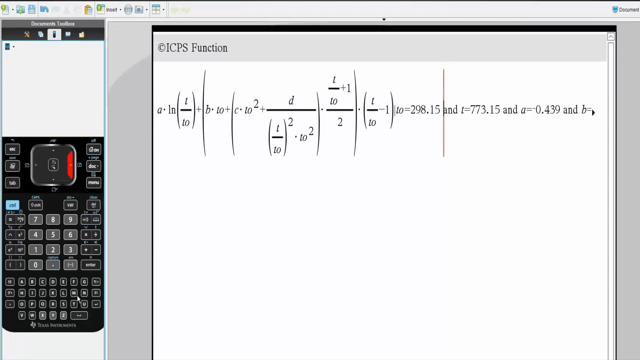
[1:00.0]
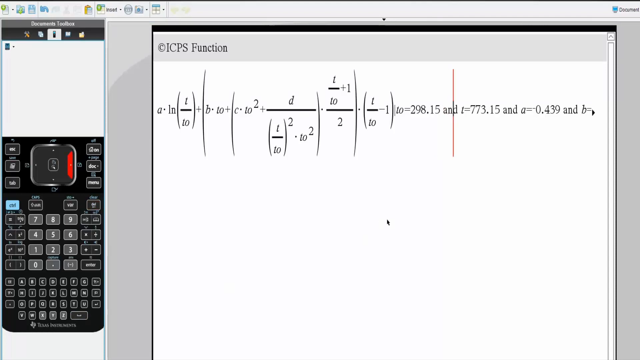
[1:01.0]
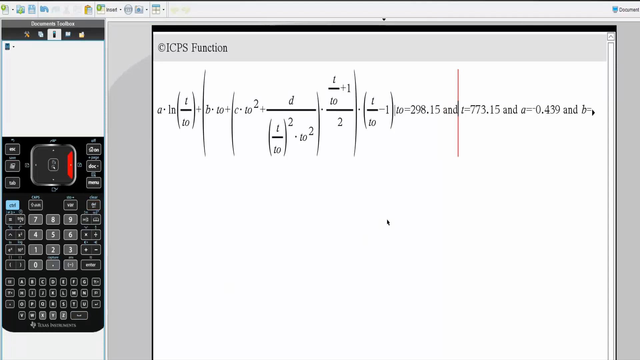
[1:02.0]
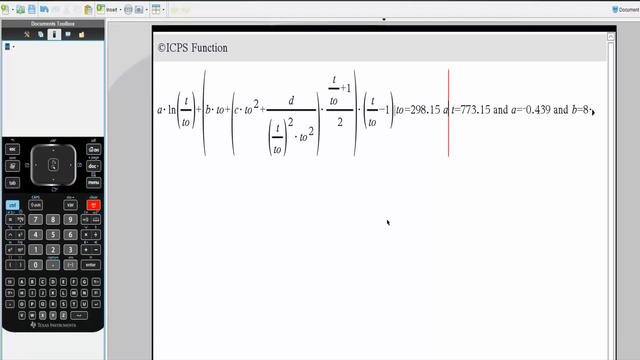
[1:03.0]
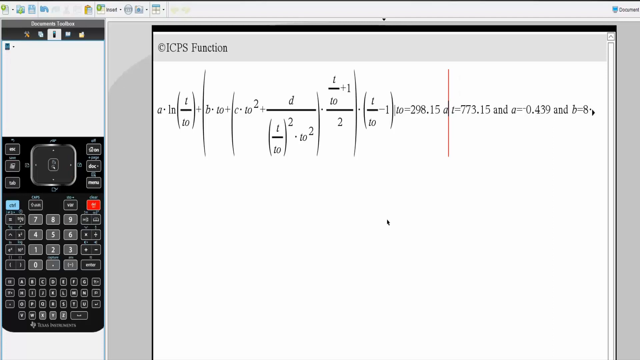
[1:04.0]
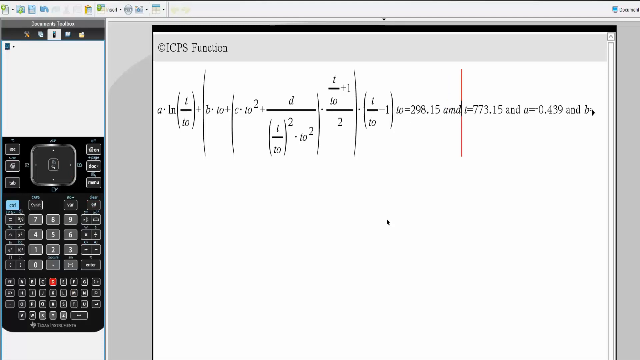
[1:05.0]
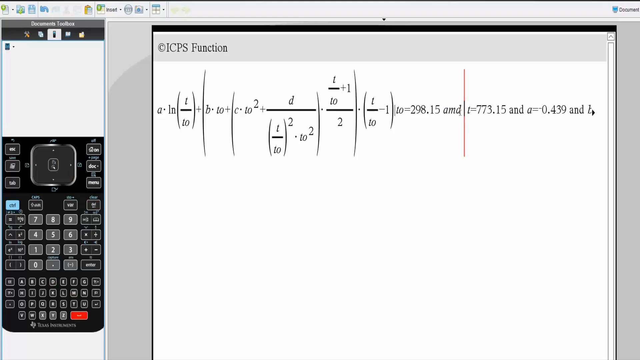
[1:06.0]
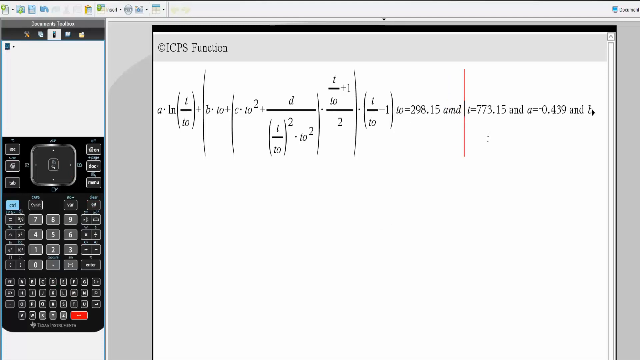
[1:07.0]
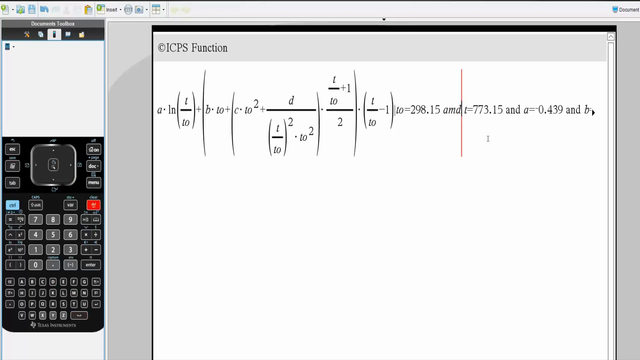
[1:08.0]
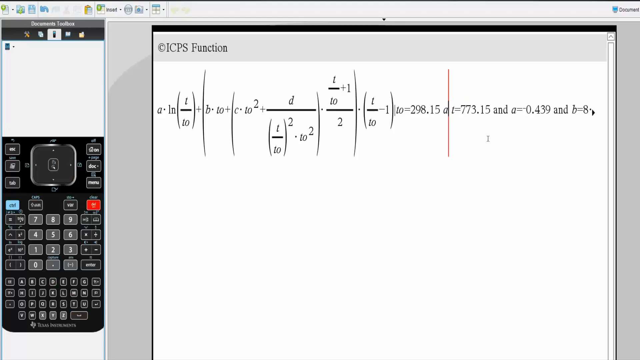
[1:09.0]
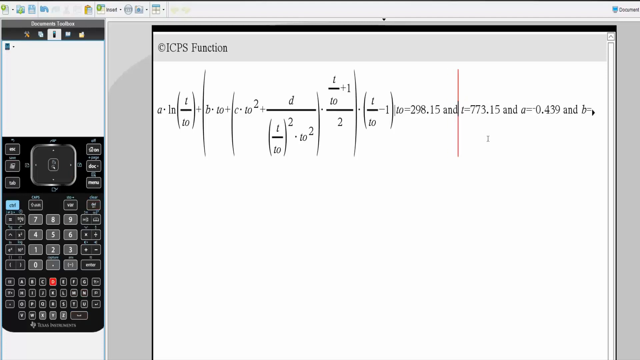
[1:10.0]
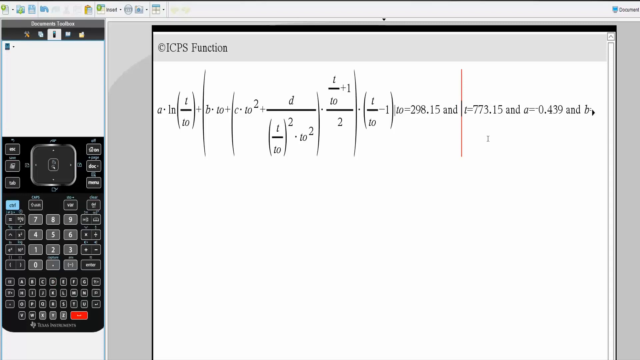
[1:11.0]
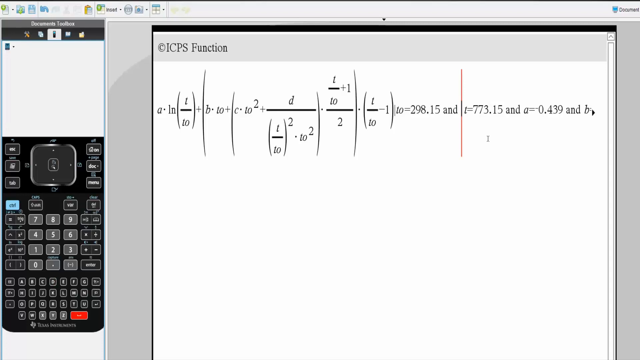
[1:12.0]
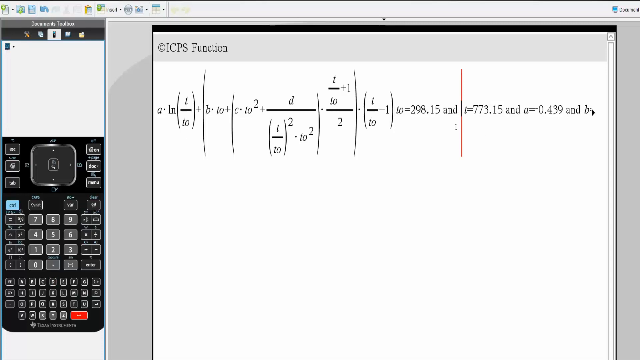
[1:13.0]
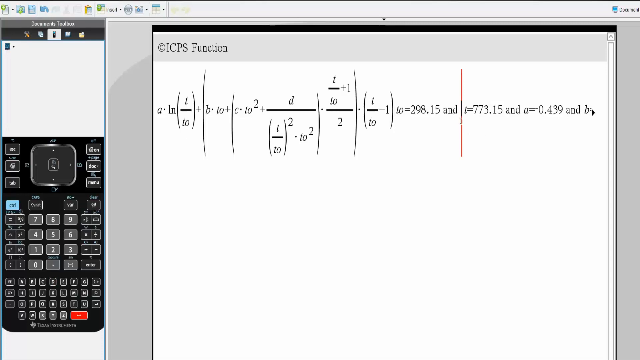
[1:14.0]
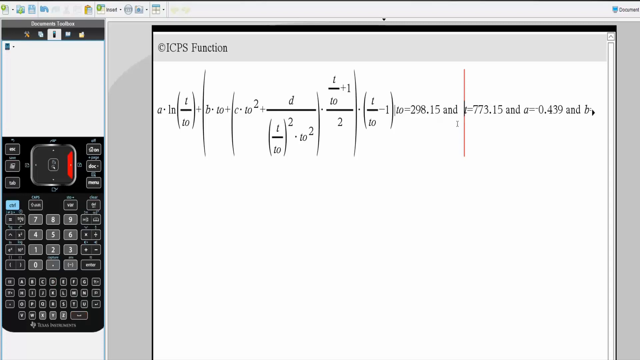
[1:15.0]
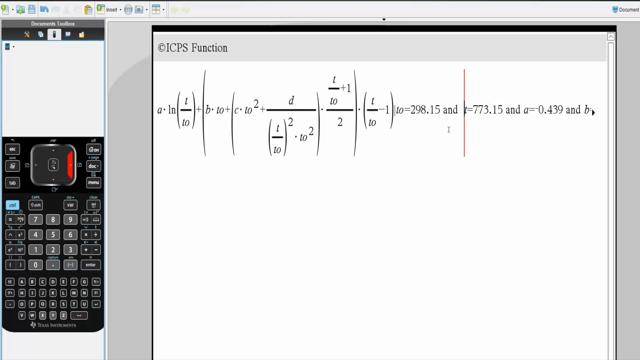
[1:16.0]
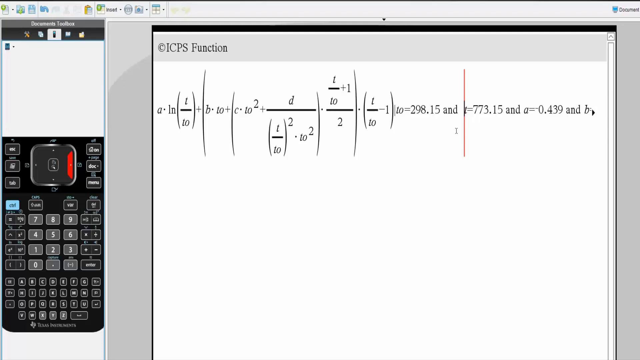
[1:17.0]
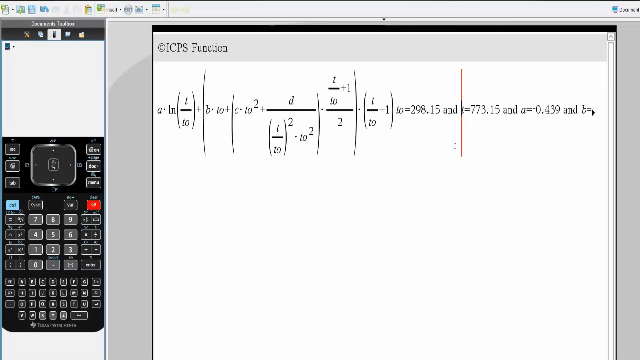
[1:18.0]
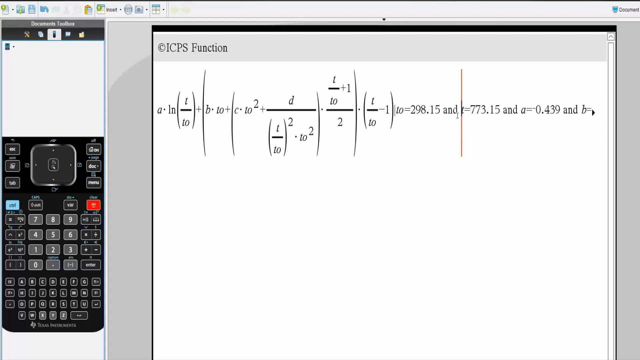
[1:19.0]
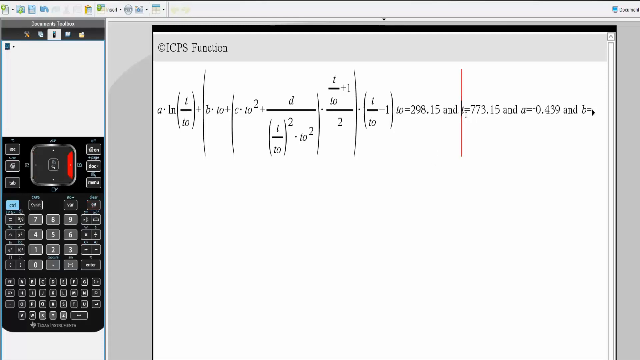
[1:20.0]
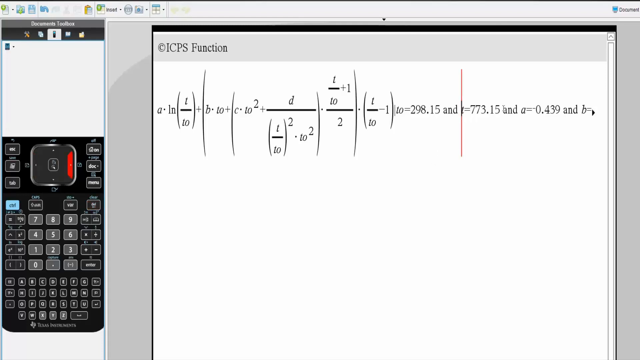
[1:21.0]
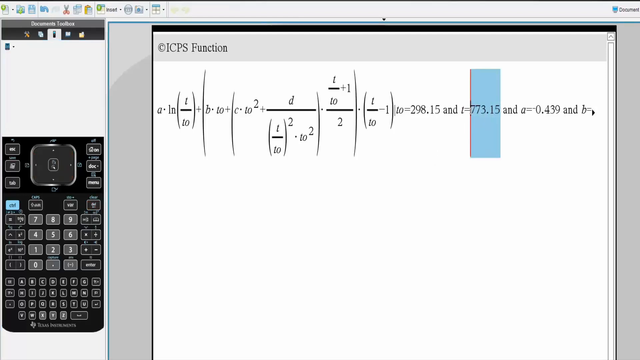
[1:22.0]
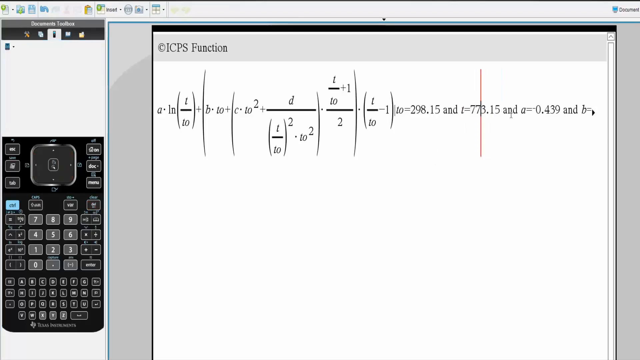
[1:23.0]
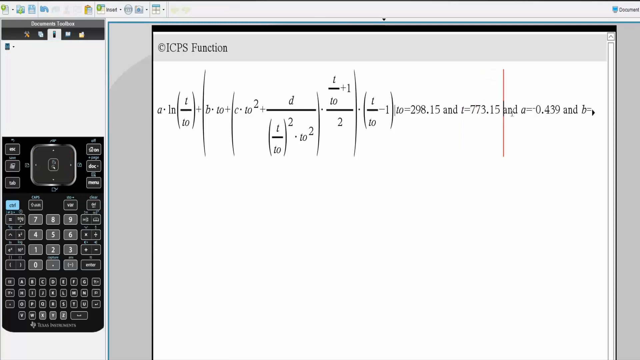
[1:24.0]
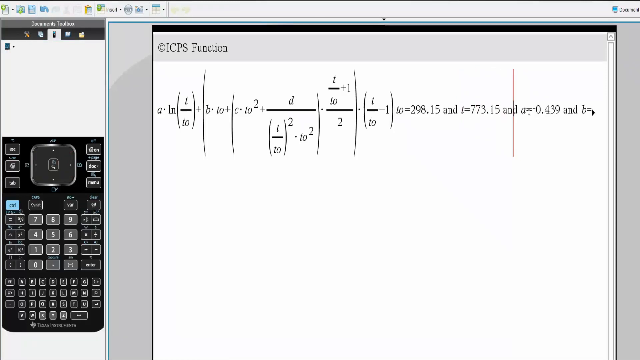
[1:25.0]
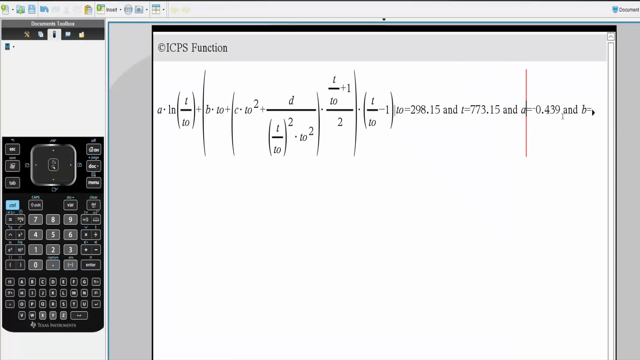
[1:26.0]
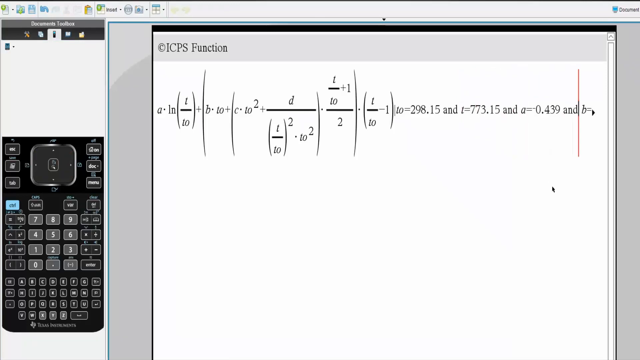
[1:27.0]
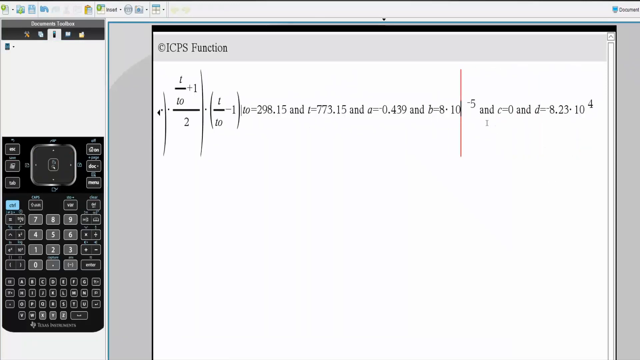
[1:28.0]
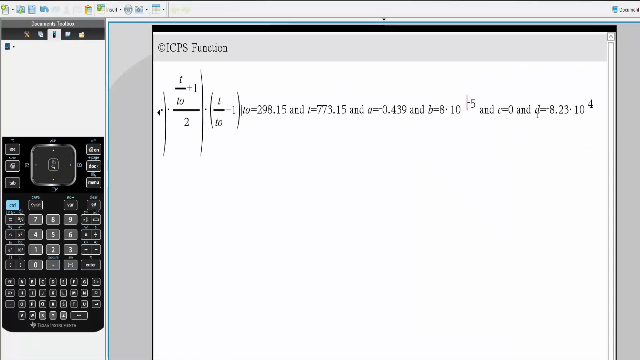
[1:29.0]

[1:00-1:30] The giant ICPS formula is on the right side and a graphic calculator on the left side; the two elements appear related, with sections of the formula seemingly copied or highlighted and then manipulated with the calculator. The person leading the lecture types text on the right-hand side, changing the variable values: T0 equals 298.15, T equals 773.15, A equals minus 0.439, and B equals 8 times 10 to the power of 5. The notepad extends farther to the right than it first appeared, and scrolling right reveals more information. The cursor highlights sections of the formula and moves around specific parts and variables.